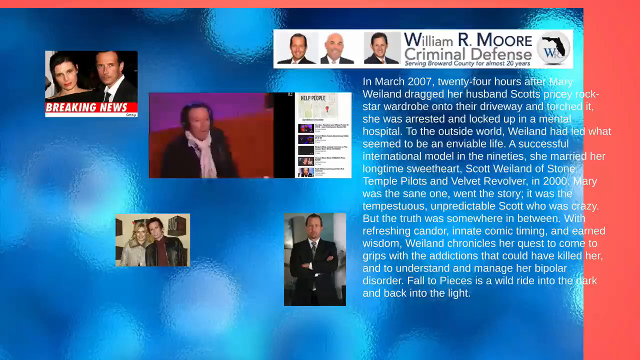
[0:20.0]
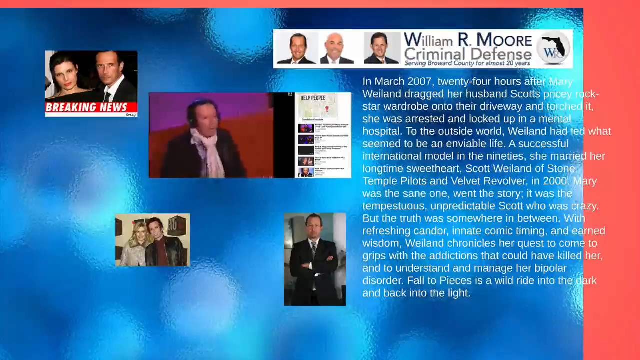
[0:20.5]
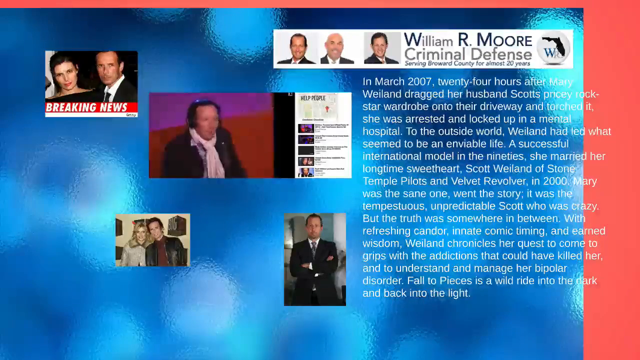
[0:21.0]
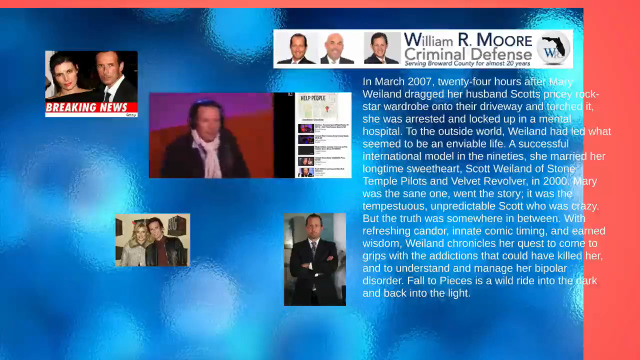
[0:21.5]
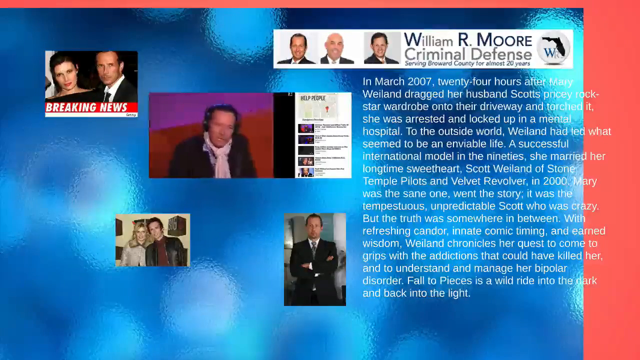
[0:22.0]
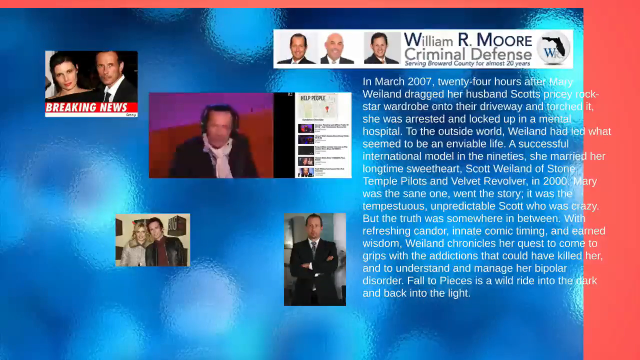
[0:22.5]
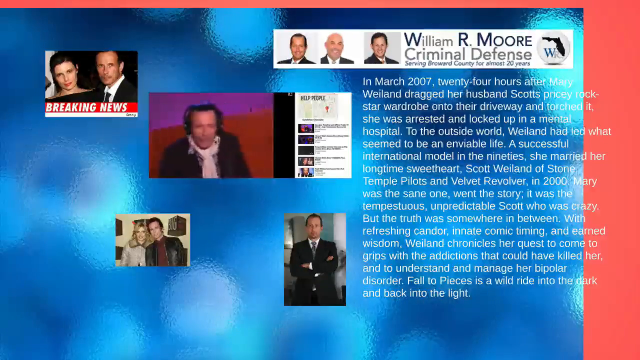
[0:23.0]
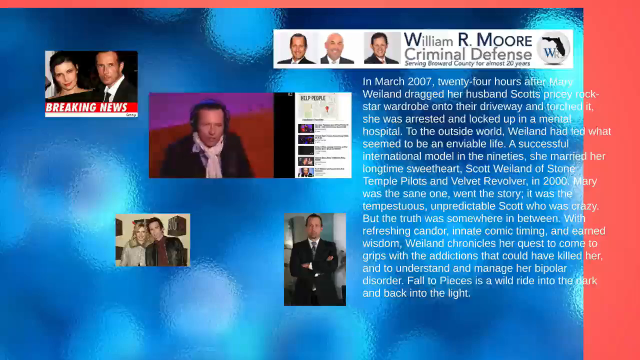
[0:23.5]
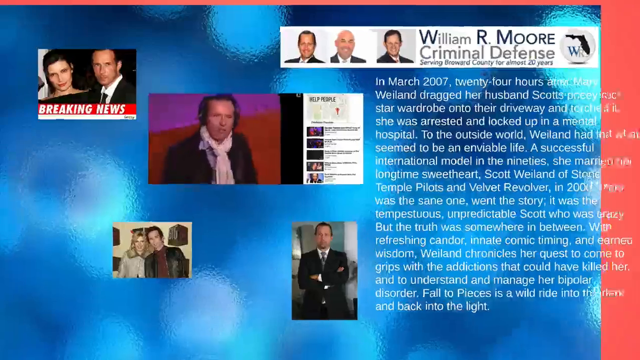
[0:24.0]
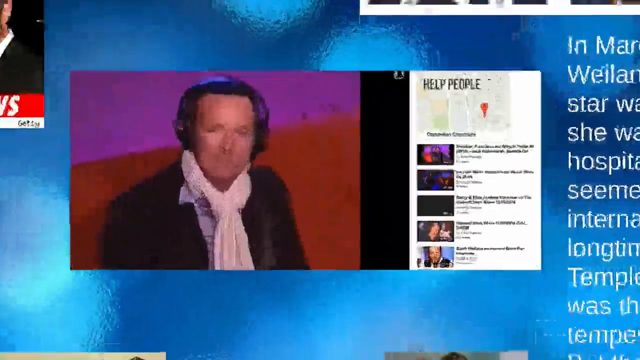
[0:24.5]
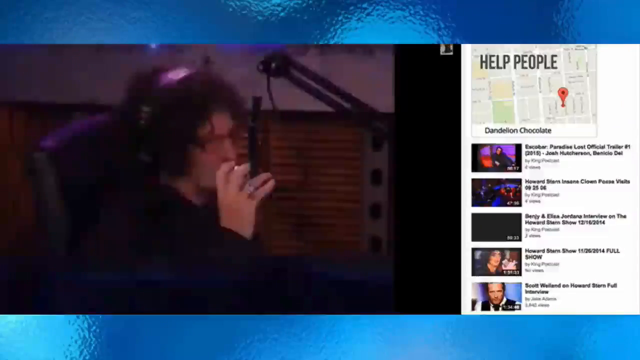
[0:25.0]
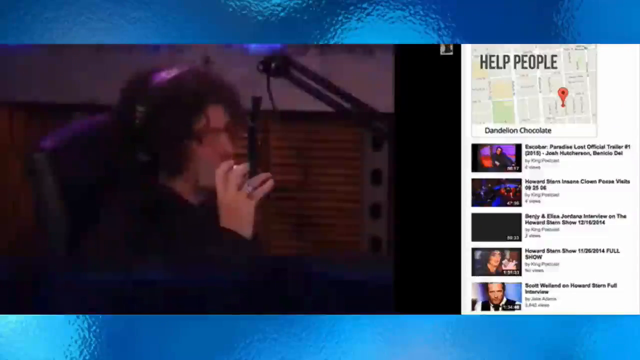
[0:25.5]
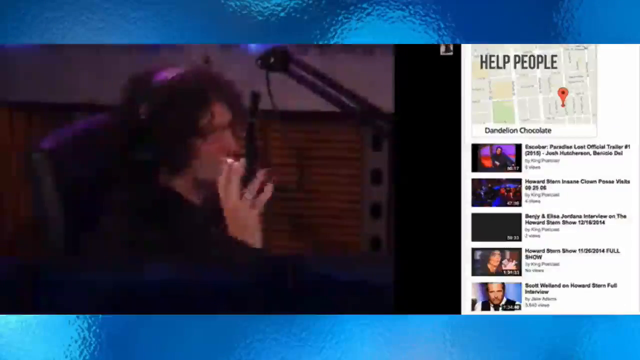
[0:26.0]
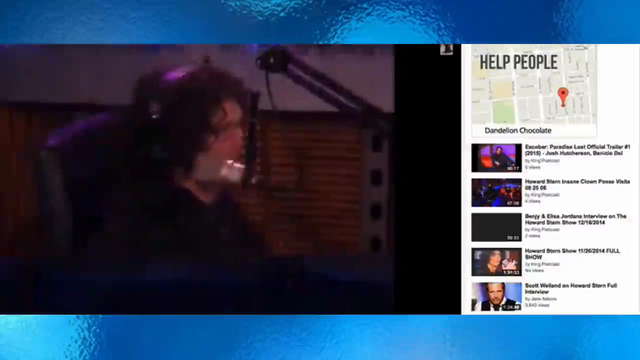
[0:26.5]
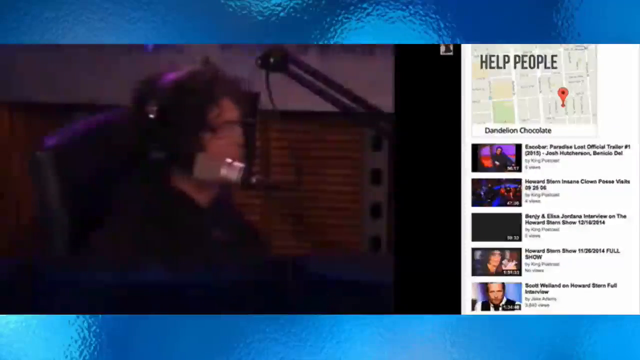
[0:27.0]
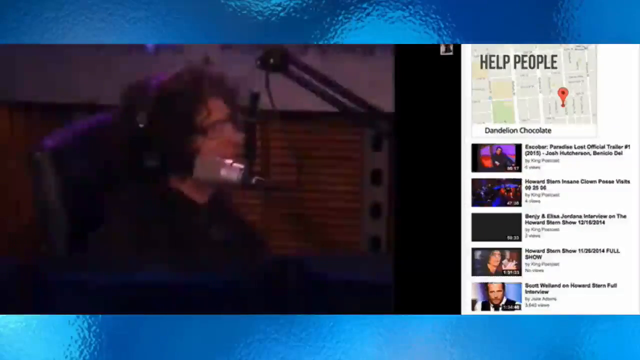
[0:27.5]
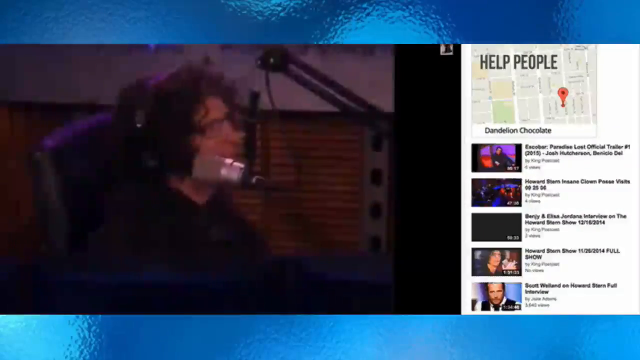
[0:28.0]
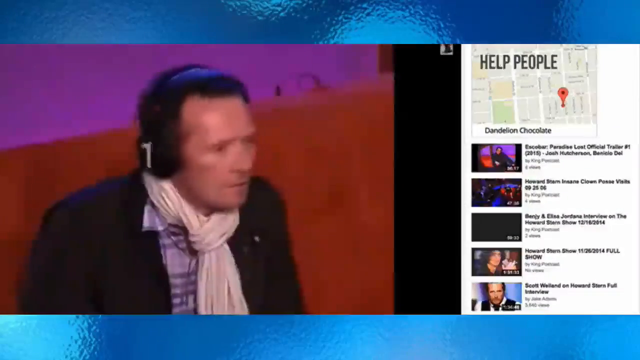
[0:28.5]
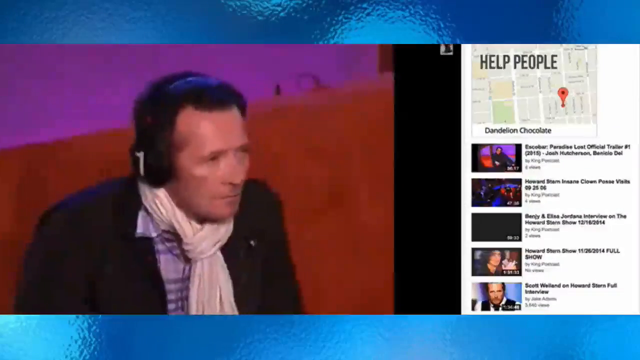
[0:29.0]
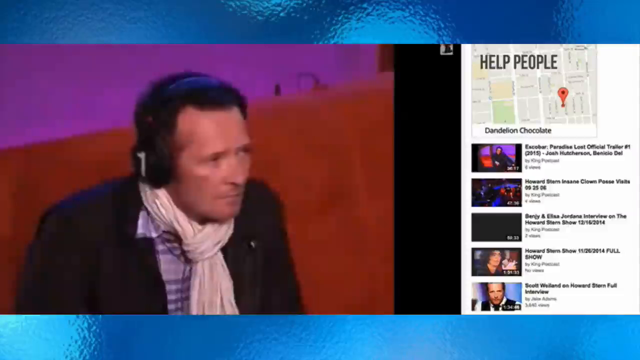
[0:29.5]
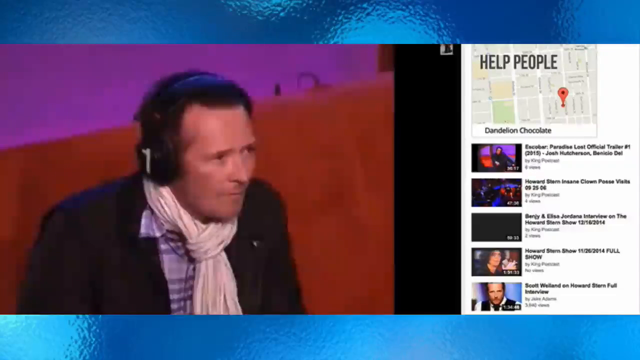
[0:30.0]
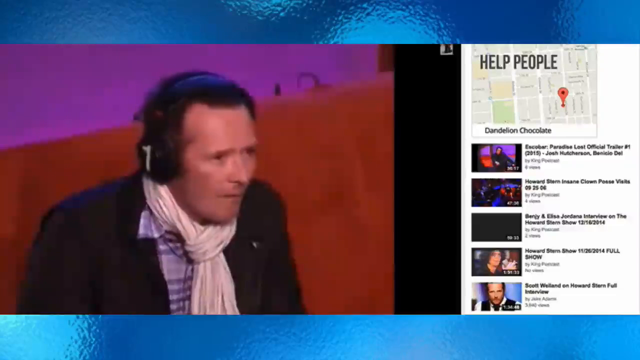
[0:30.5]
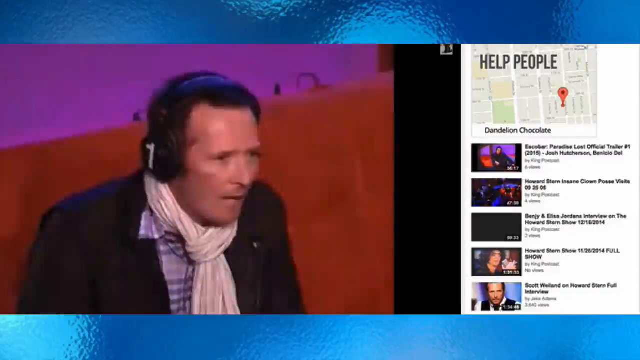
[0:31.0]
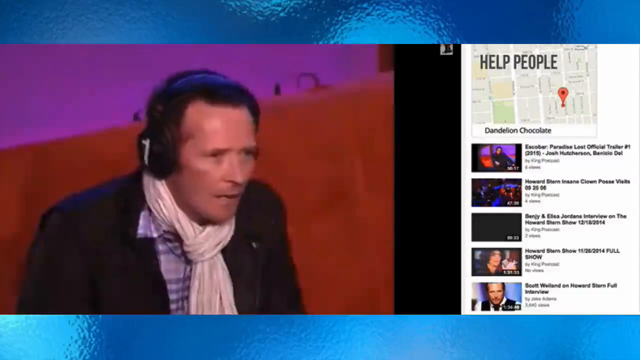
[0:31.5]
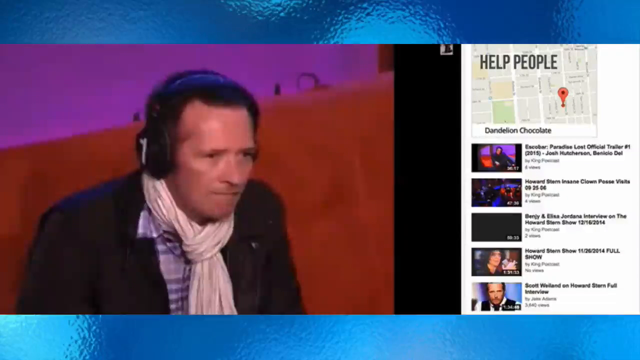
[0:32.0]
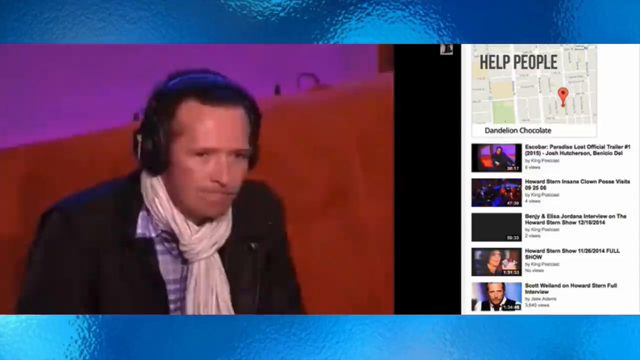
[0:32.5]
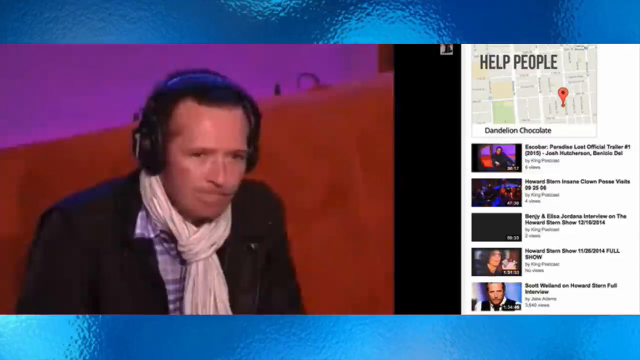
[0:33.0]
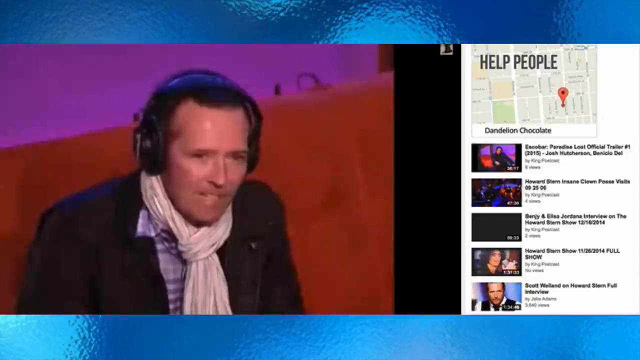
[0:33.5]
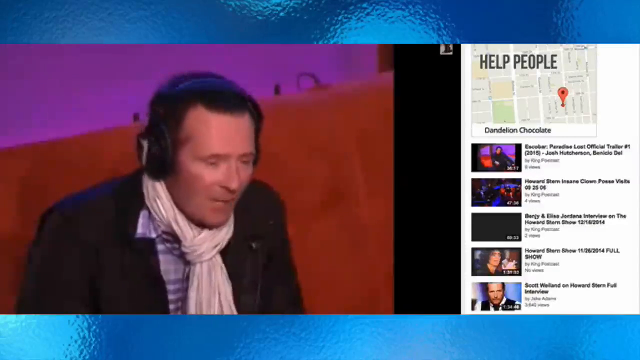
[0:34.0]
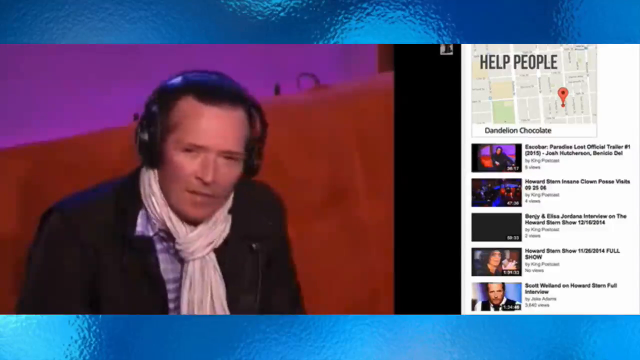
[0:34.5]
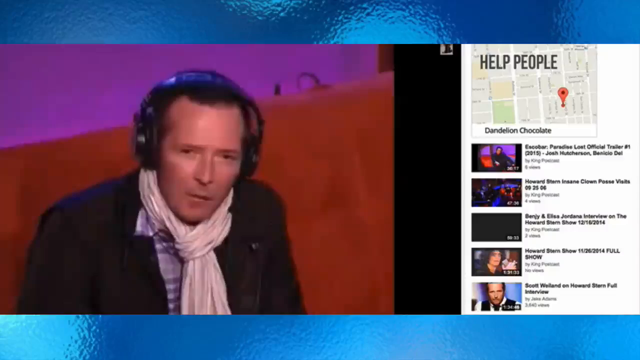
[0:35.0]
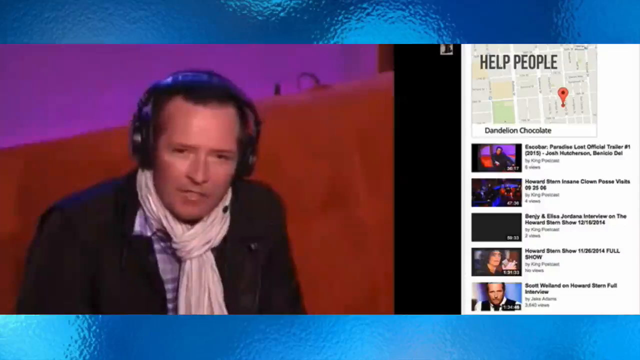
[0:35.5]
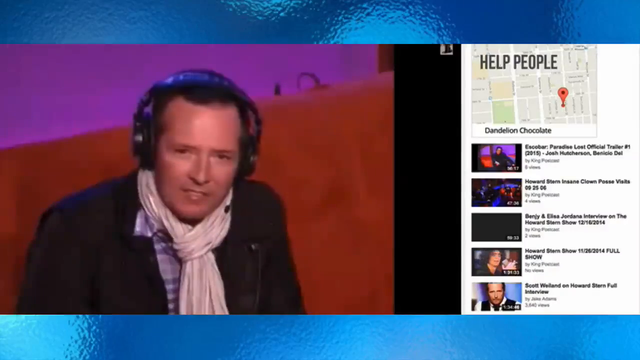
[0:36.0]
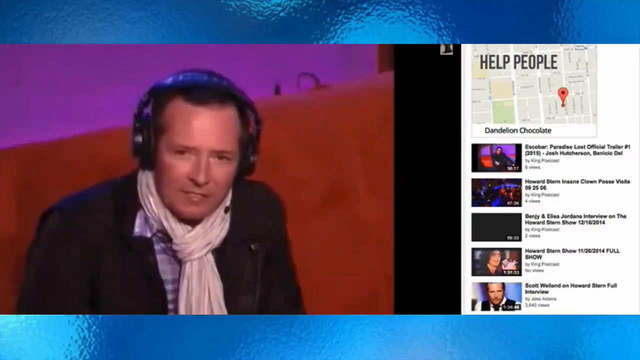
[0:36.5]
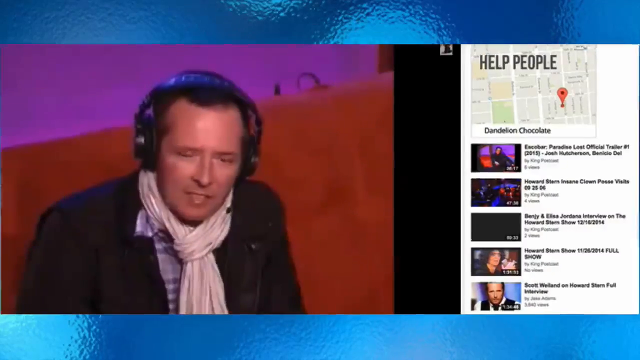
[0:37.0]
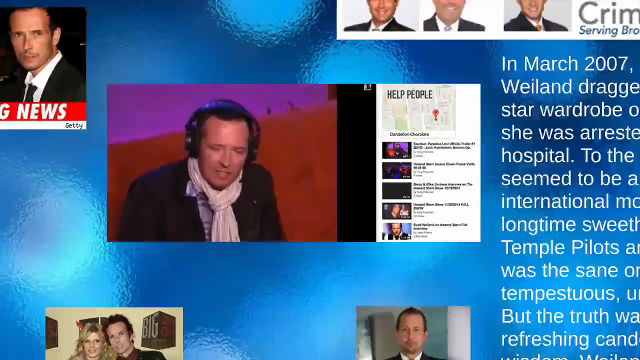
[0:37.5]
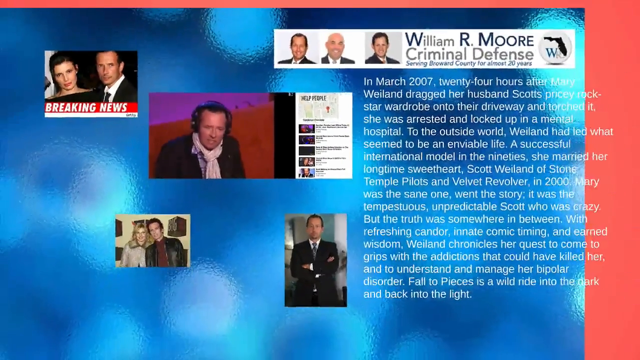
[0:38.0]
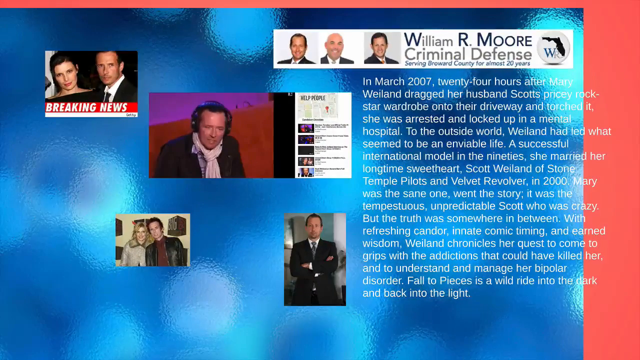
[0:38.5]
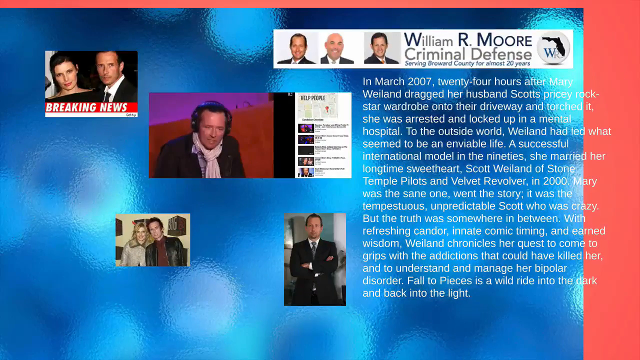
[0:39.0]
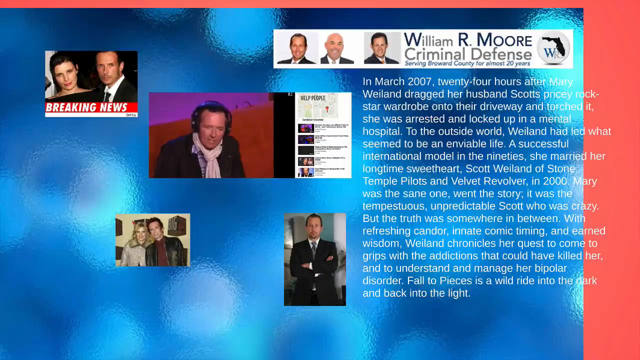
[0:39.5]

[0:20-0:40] Several different people appear on screen, including a couple sitting on their own. Someone is talking or singing, and then she sings. A gentleman sits on a red couch, wearing a check shirt, a blazer and a scarf around his neck, and talks. The wallpaper behind the content is a blue, watery design.